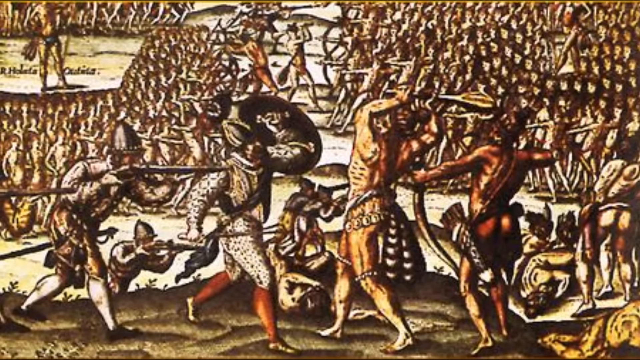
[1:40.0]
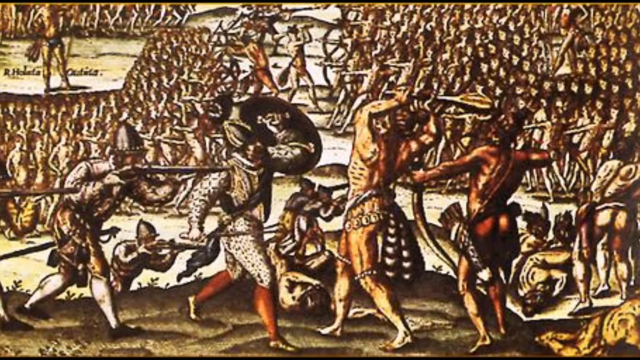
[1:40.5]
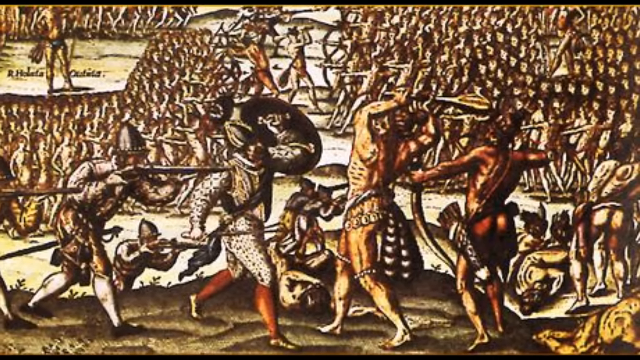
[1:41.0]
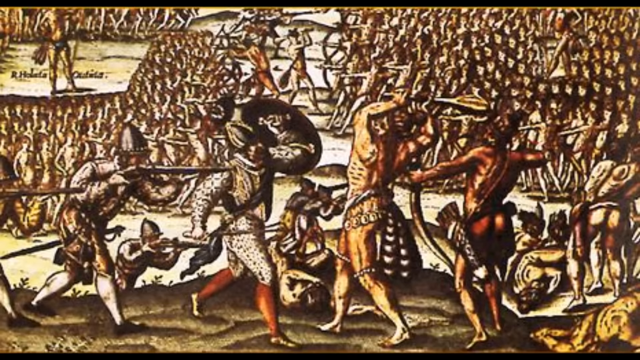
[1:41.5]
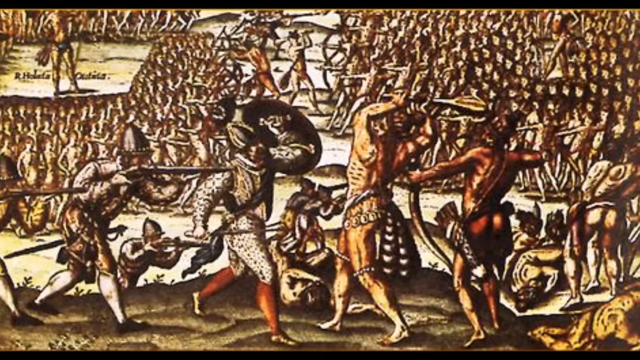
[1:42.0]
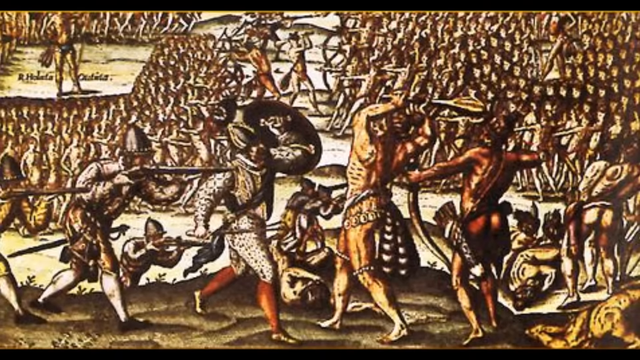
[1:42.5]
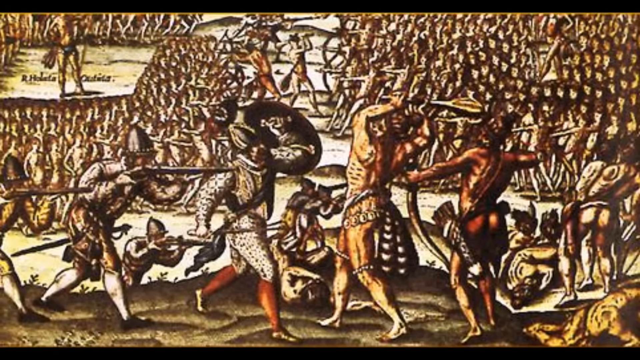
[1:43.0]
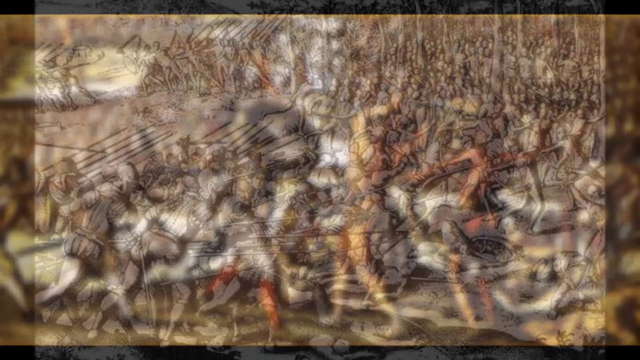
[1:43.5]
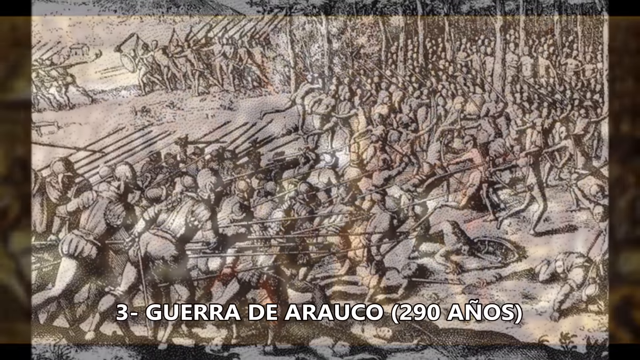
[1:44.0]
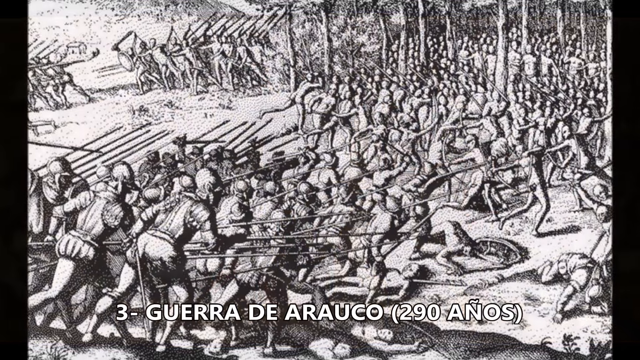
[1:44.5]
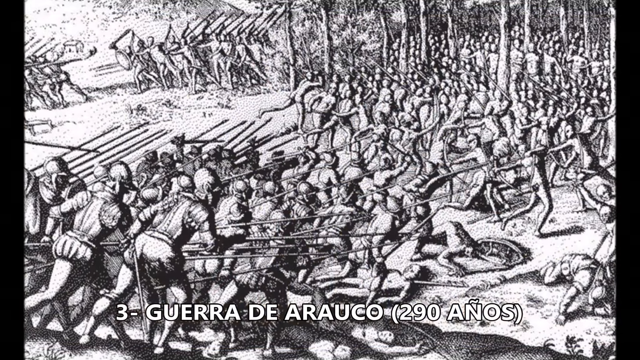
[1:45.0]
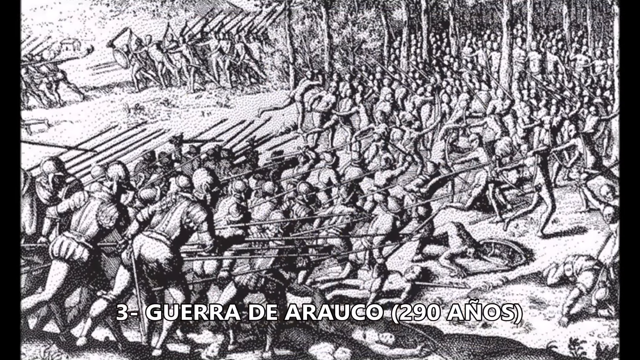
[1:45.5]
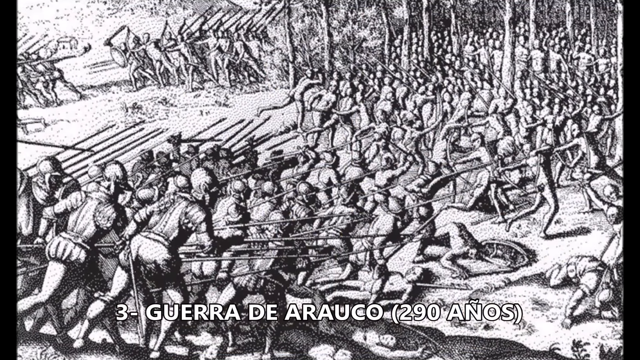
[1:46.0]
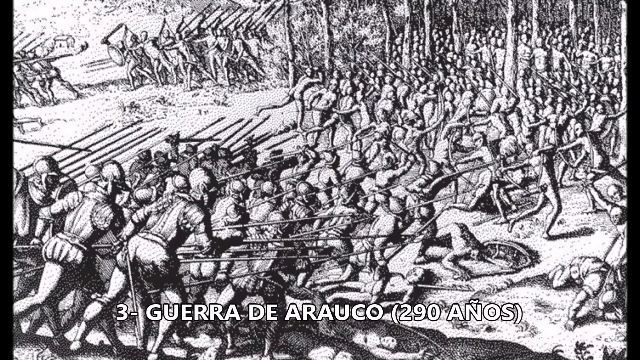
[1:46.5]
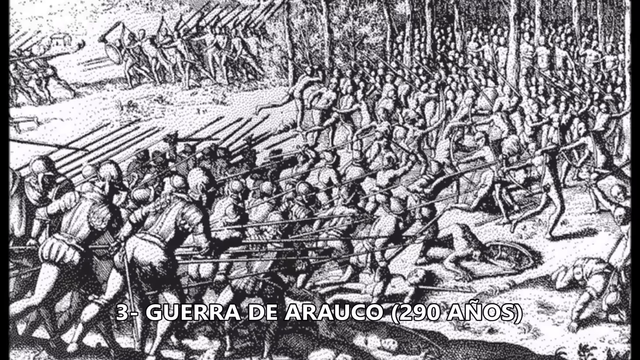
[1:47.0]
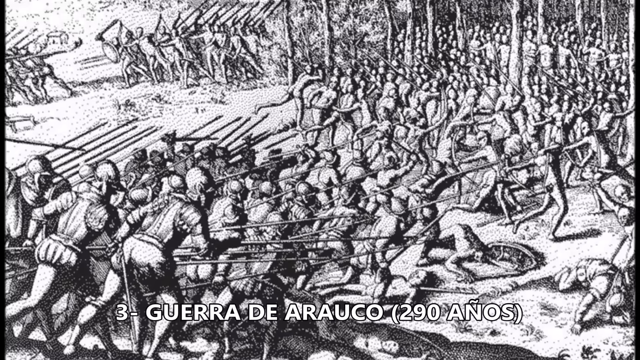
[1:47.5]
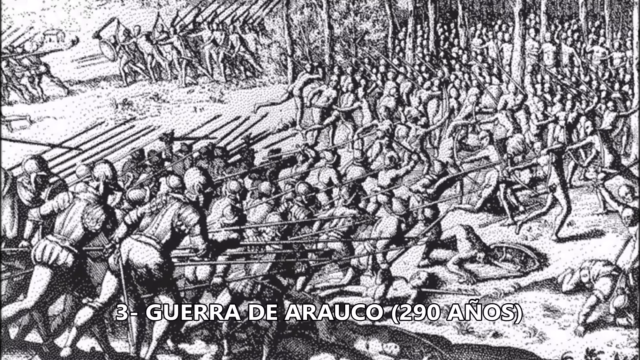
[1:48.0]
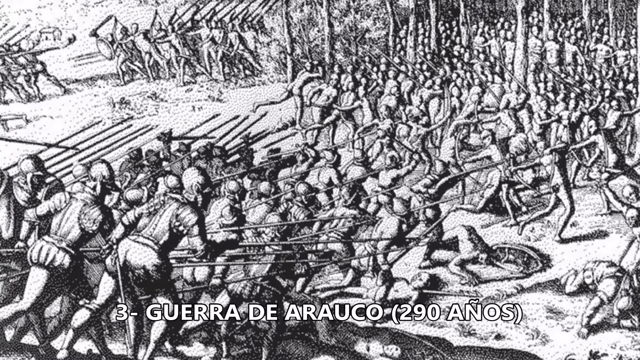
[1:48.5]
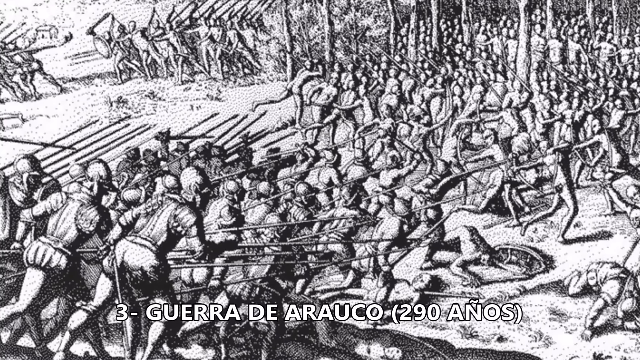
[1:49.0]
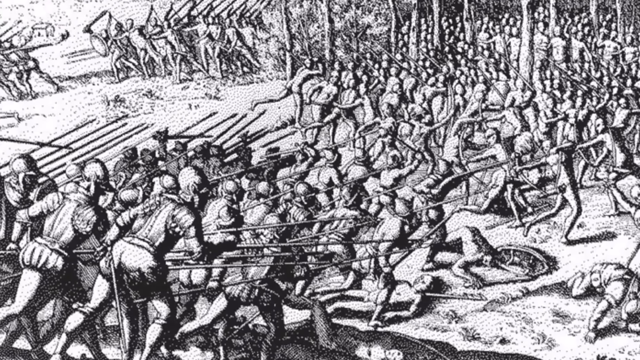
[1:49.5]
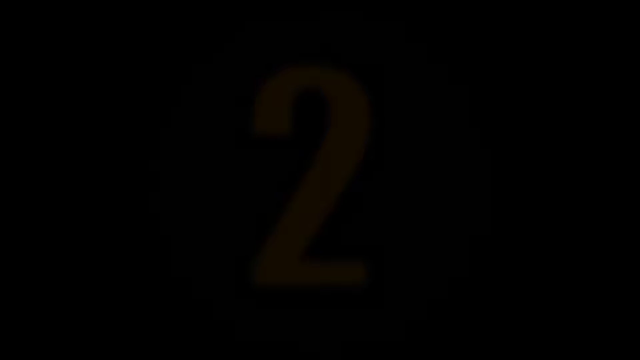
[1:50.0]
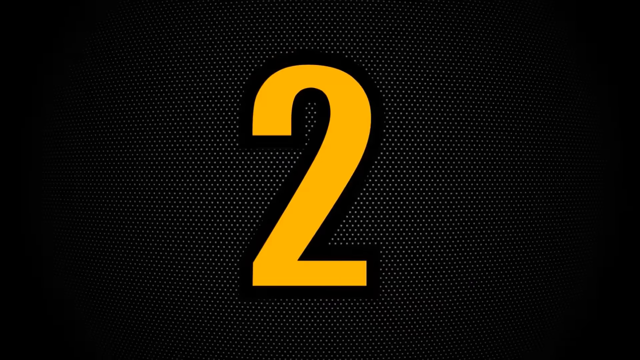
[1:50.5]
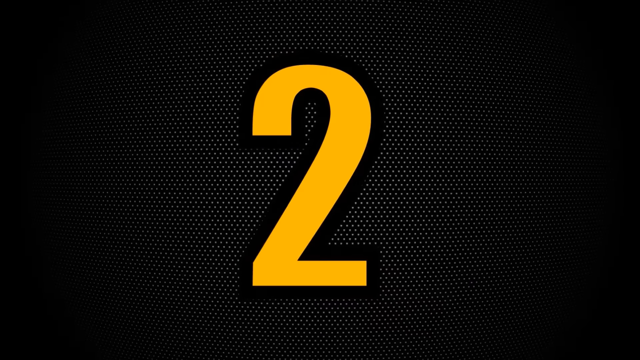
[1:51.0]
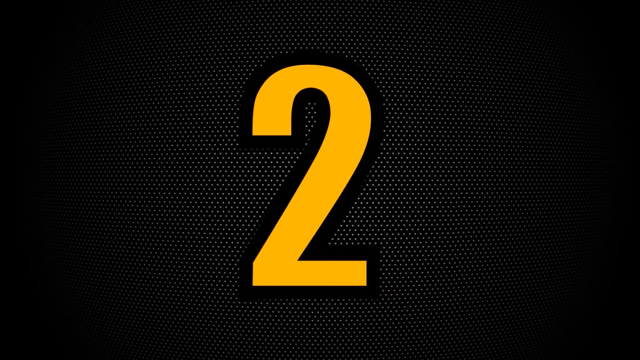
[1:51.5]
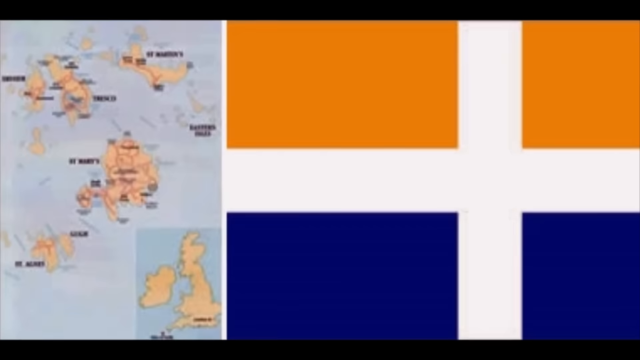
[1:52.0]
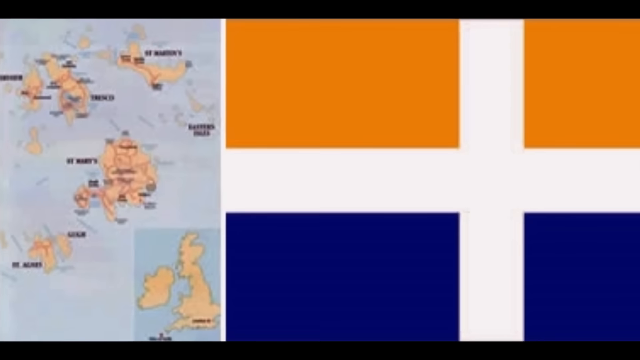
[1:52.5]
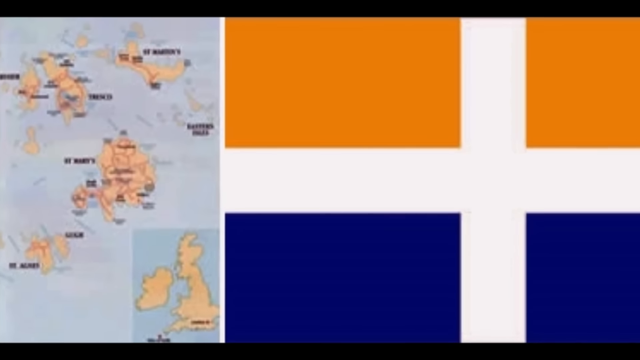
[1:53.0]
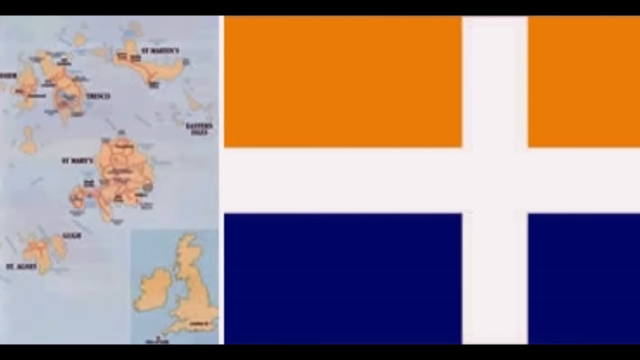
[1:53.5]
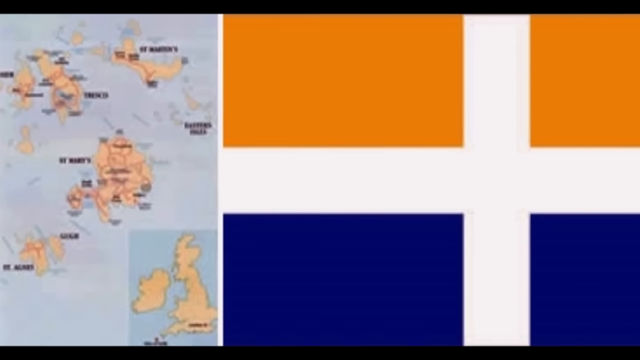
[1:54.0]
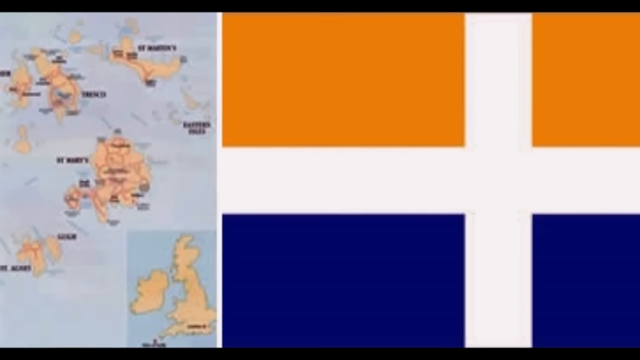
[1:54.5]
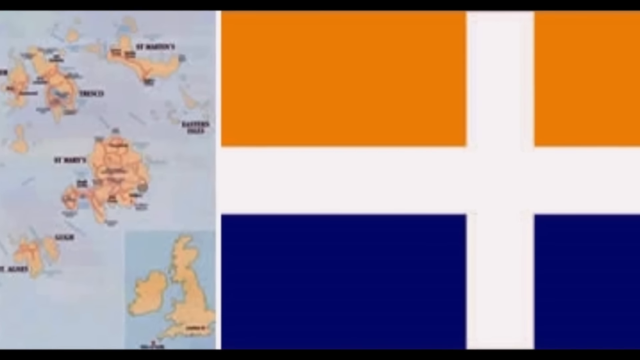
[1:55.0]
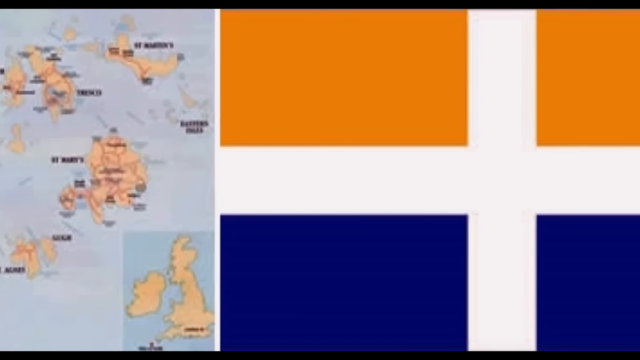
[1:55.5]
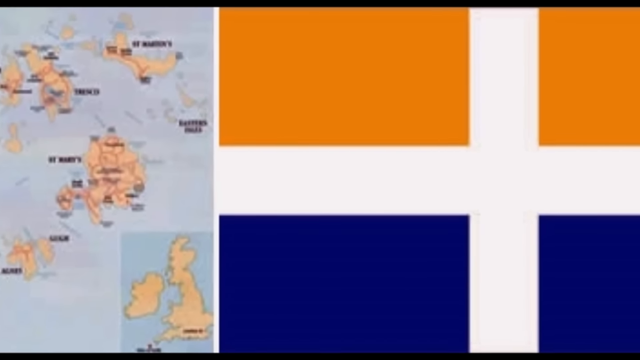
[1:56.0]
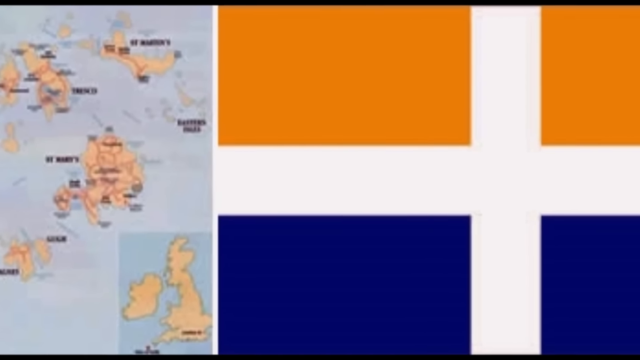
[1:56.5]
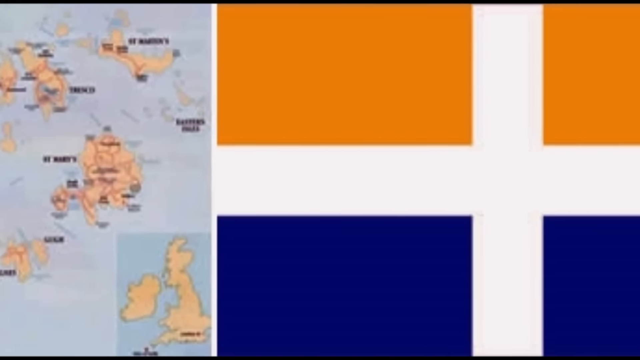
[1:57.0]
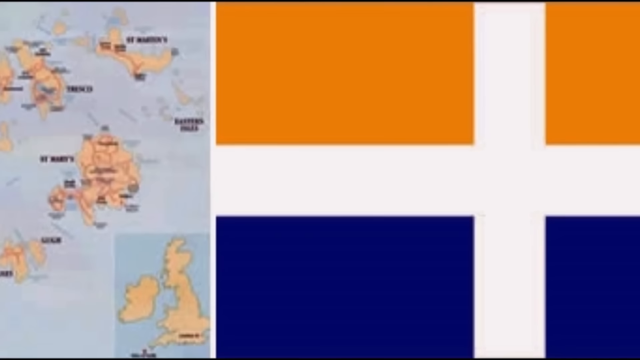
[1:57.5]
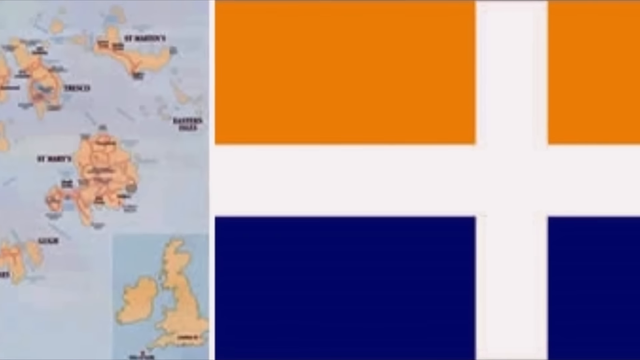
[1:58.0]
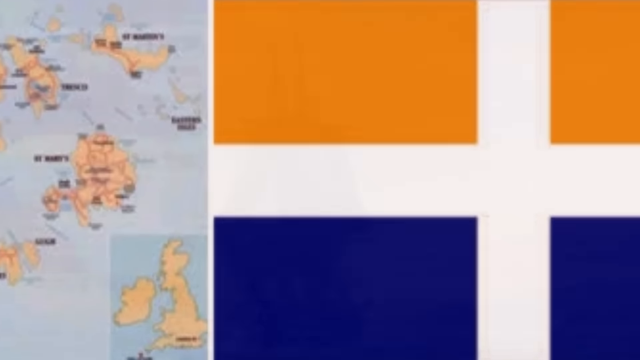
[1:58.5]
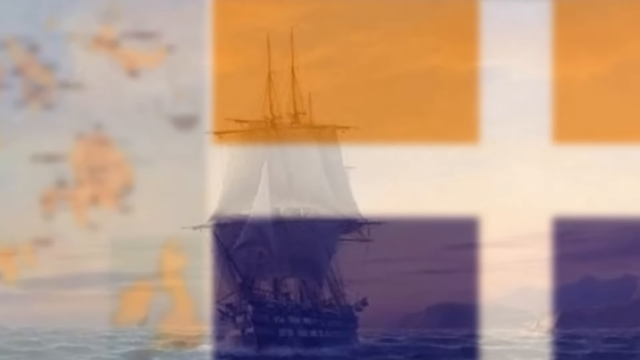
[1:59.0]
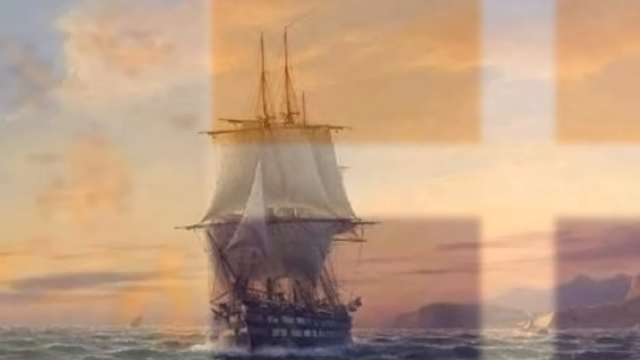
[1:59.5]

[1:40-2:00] Fighting between the Spanish and the Incas is shown, with Spanish riflemen shooting Incas armed with clubs and spears. More Spanish troops armed with spears and guns drive a much larger Inca army back. The video then moves on to war number two with a close-up of Britain, and other maps appear to show various islands, possibly the Scilly Islands, several of them next to Great Britain. A great sailing ship of the 18th century appears. A flag shows a cross the same shape as the cross of St George, with orange in the top two panels and blue in the bottom two; its country is unclear.